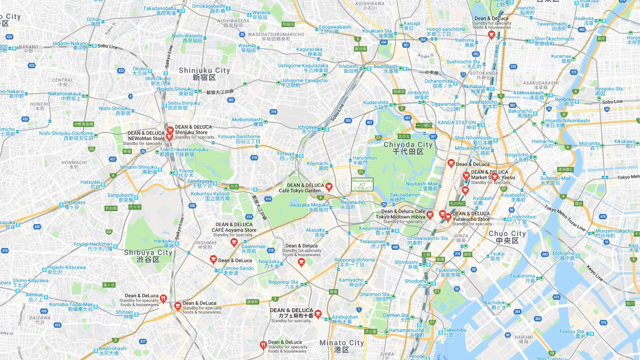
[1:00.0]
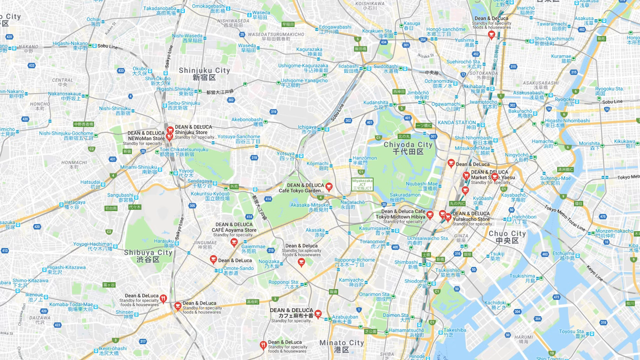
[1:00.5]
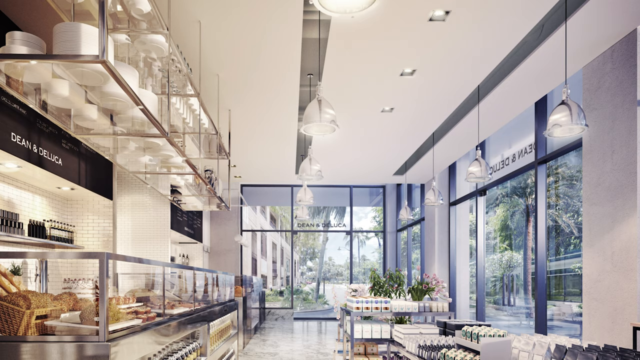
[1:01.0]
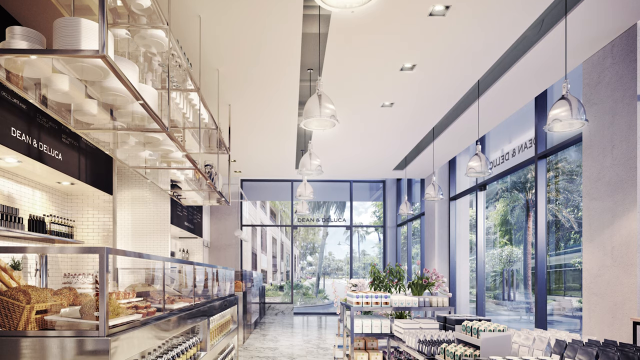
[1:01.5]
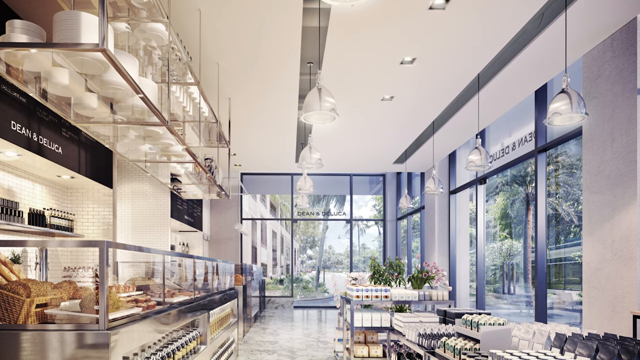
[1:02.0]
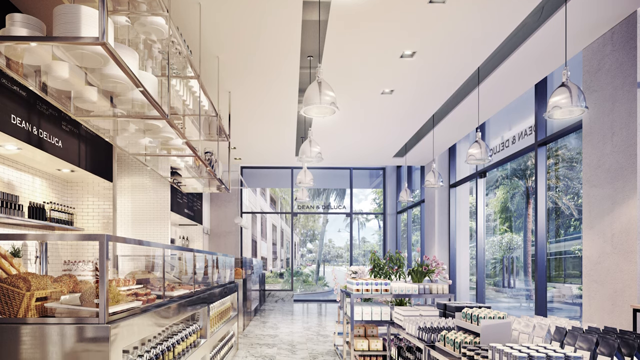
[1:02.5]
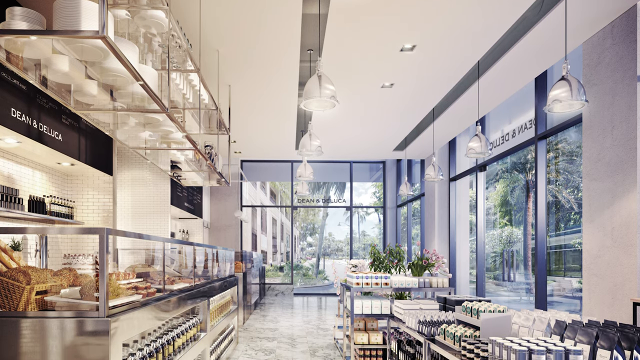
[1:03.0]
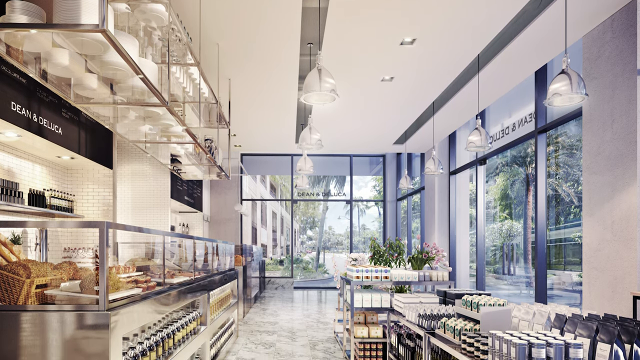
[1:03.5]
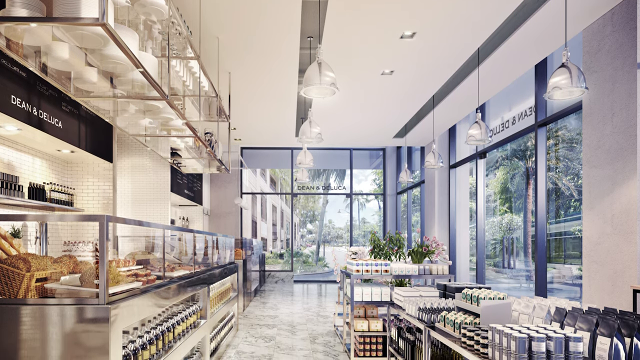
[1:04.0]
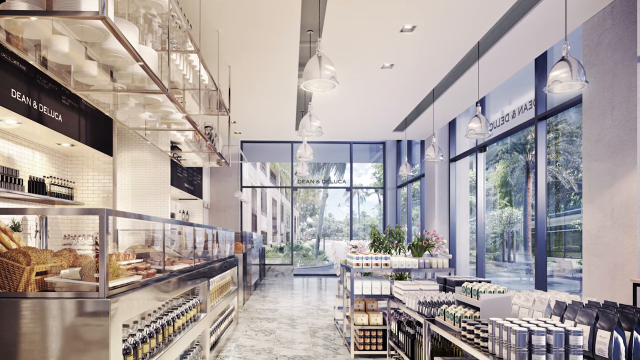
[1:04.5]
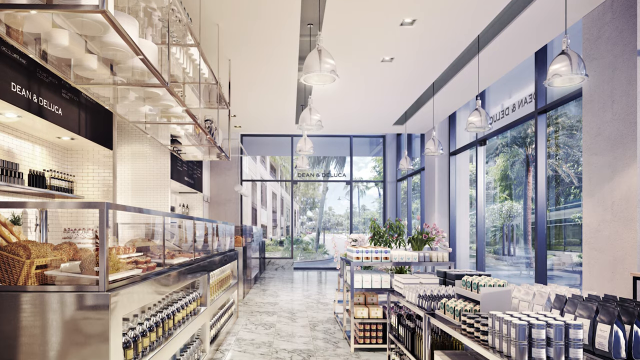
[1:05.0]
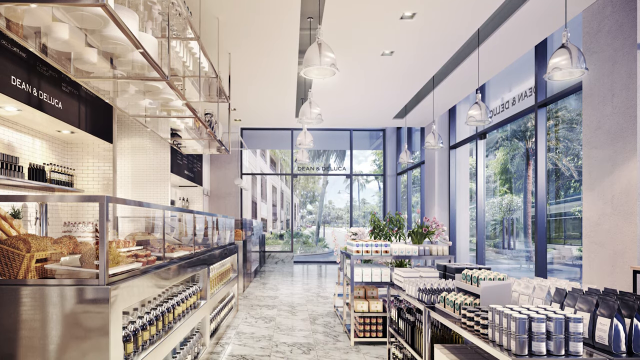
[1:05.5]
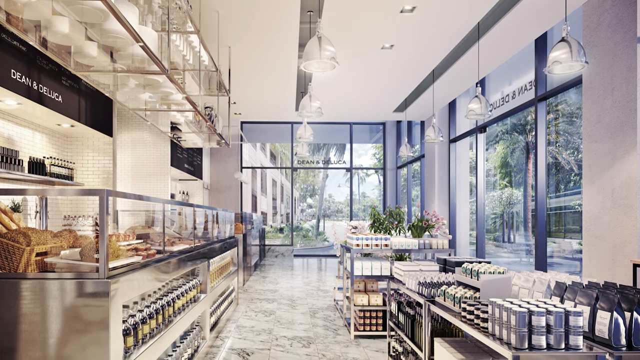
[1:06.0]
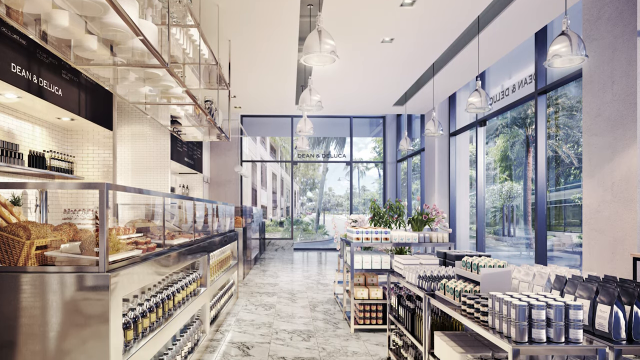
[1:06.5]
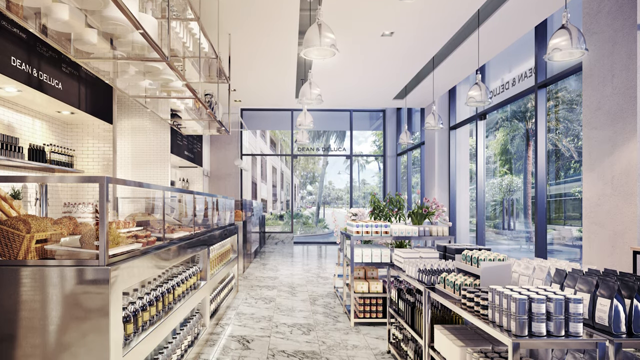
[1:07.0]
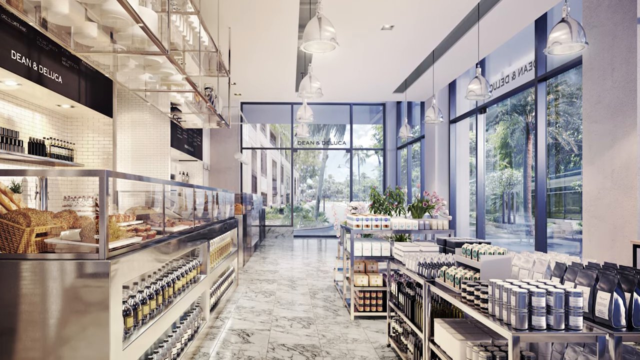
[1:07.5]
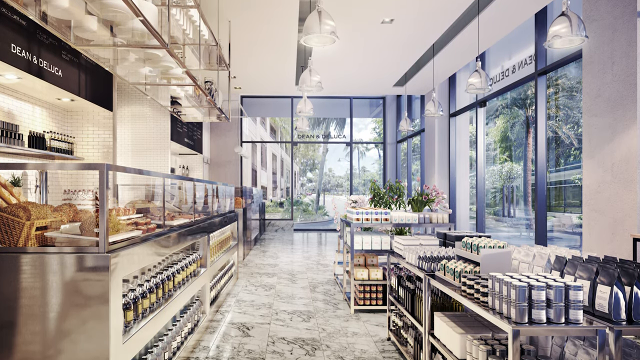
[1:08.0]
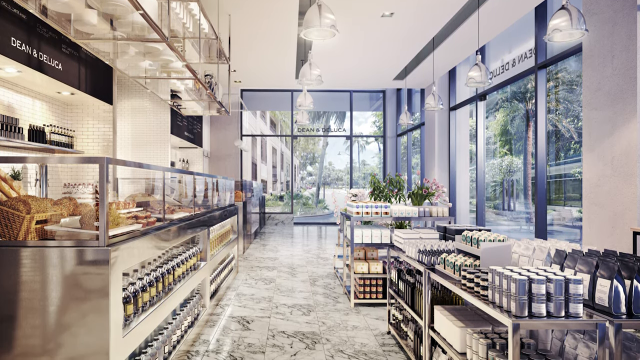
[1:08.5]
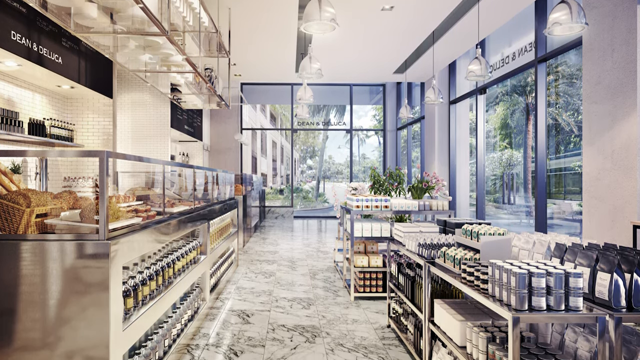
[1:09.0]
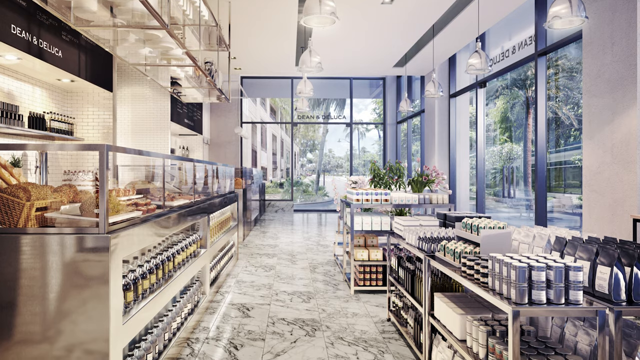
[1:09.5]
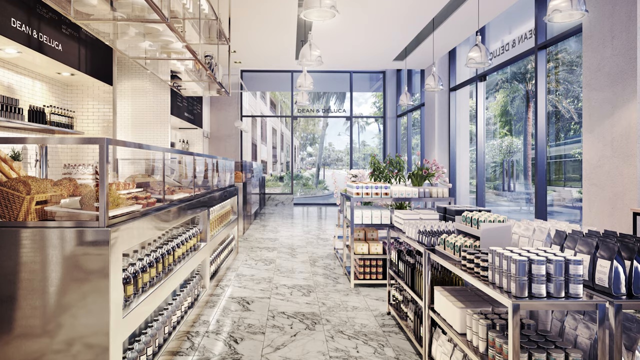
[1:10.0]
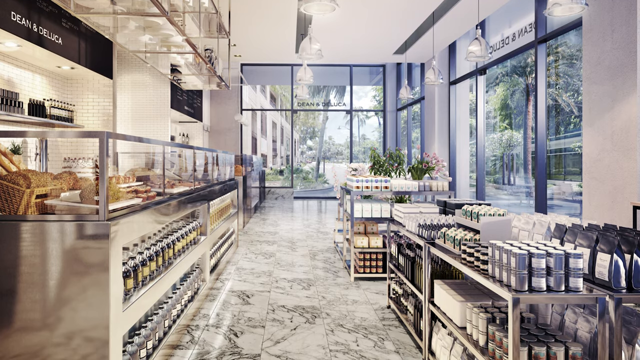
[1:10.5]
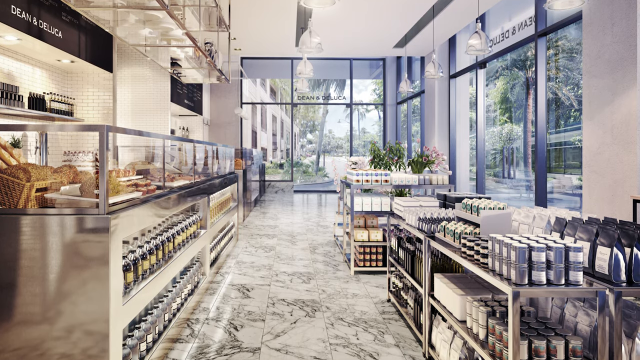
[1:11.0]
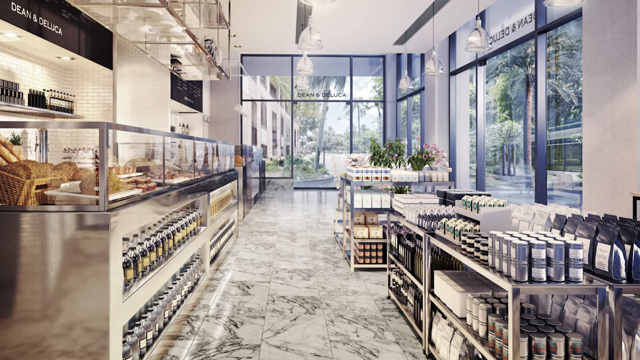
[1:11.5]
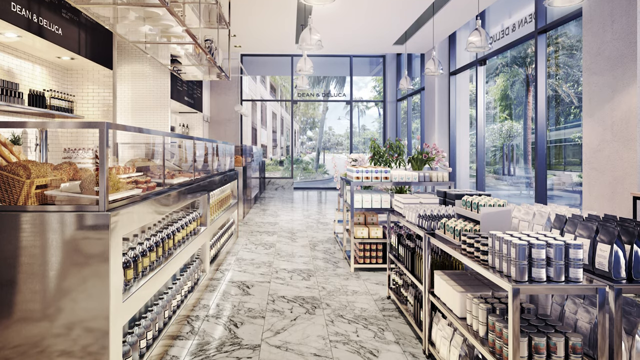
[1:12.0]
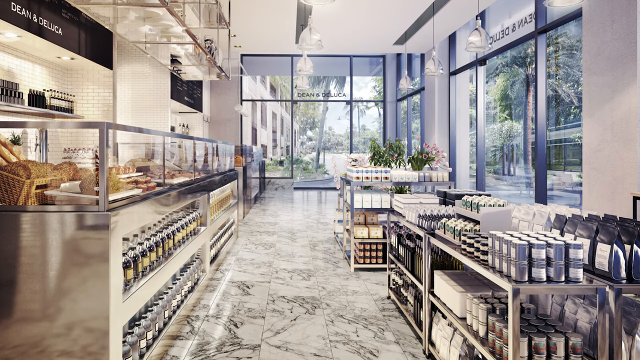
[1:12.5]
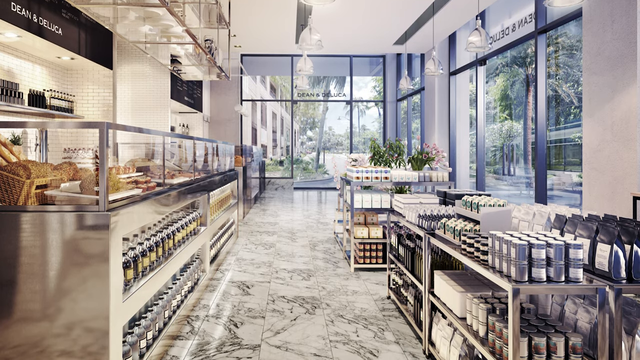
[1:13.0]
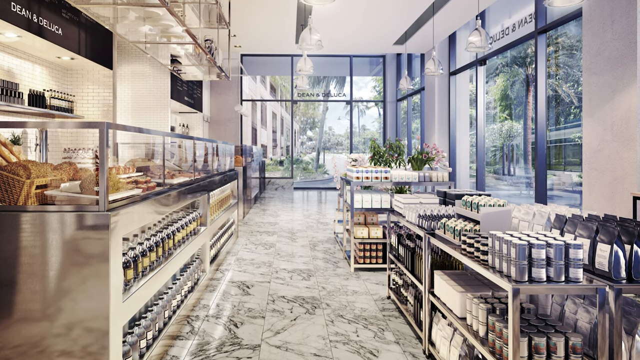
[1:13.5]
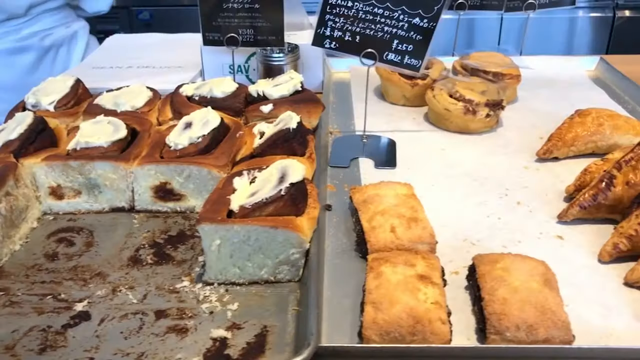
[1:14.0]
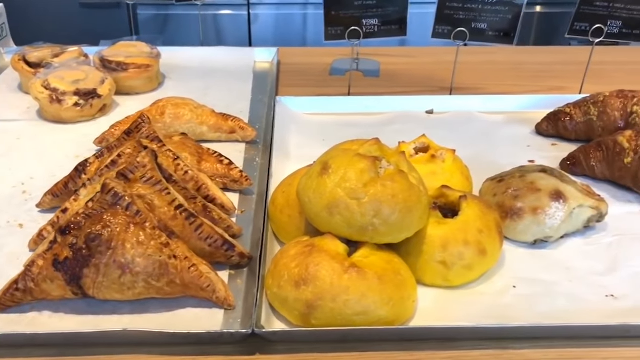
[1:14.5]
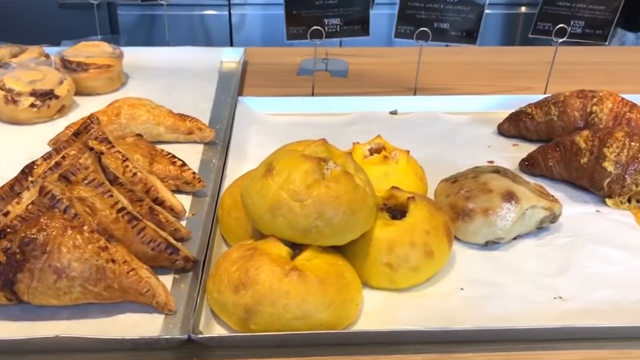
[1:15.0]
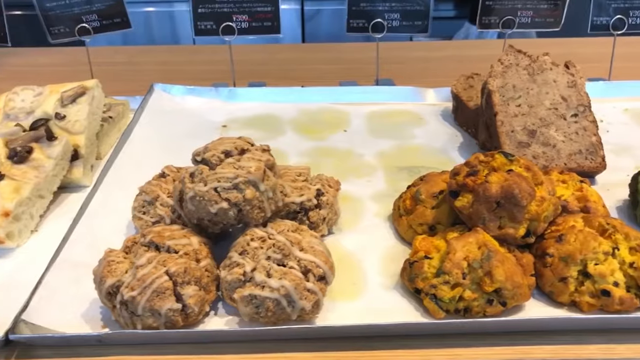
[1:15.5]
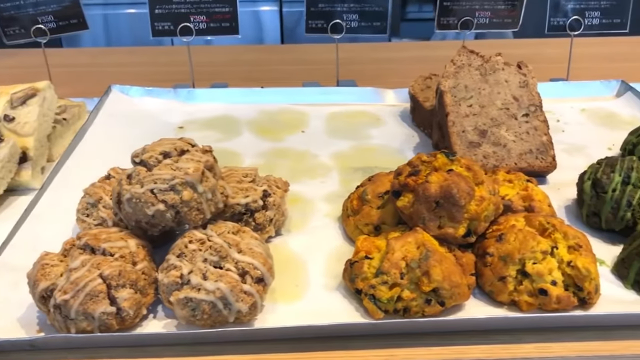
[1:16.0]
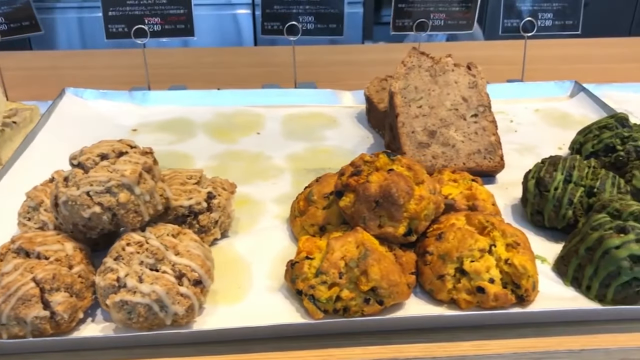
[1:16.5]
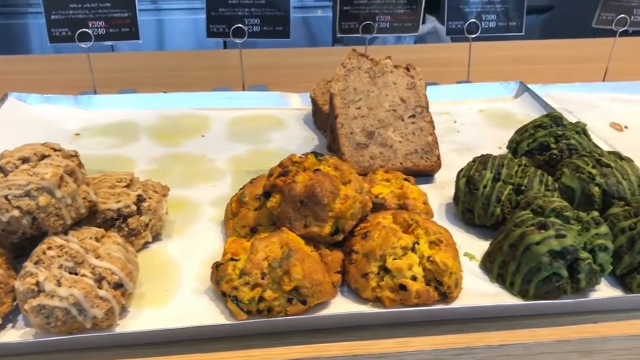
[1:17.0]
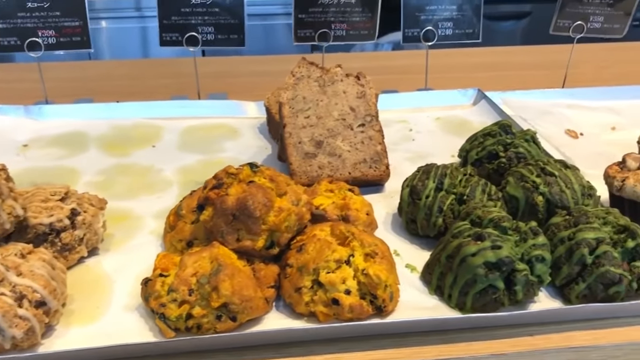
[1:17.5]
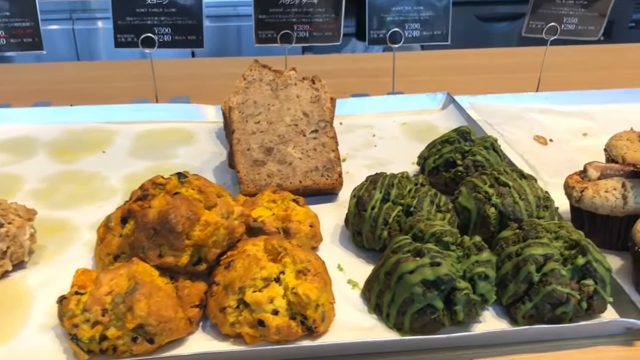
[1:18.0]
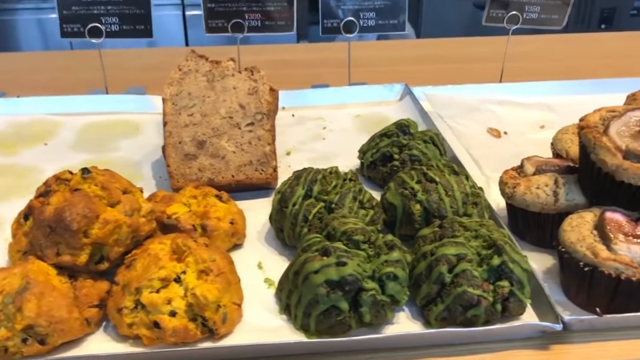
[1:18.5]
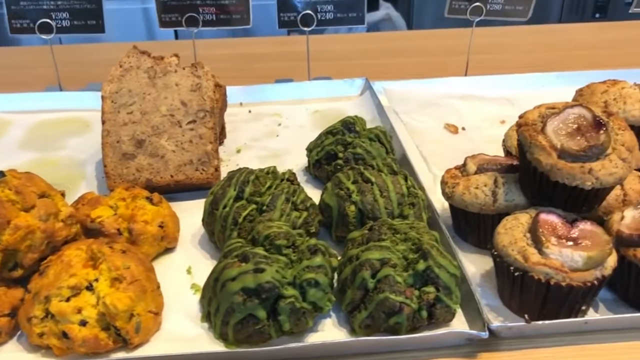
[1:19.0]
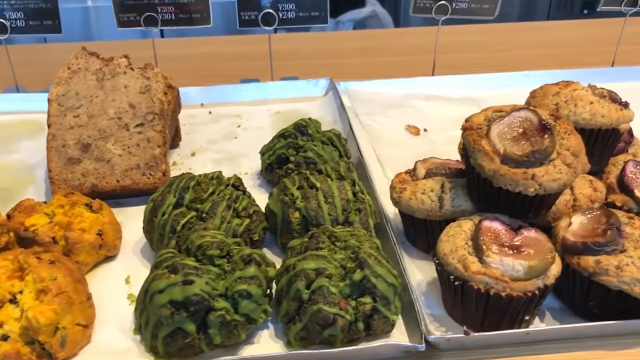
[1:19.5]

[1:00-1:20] A Google Maps view of a specific area of Japan and surrounding cities is shown briefly. A still photo of the inside of the Dean and DeLuca restaurant then pans slowly down and stops; the interior looks very white and silver and fancy, with glass windows. Next, a panning view of what looks to be a countertop inside a restaurant shows bagels, breads, foods and pastries, including cinnamon rolls, other pastries and muffins, displayed and laid out as the camera pans from left to right. Some of the pastries are green.